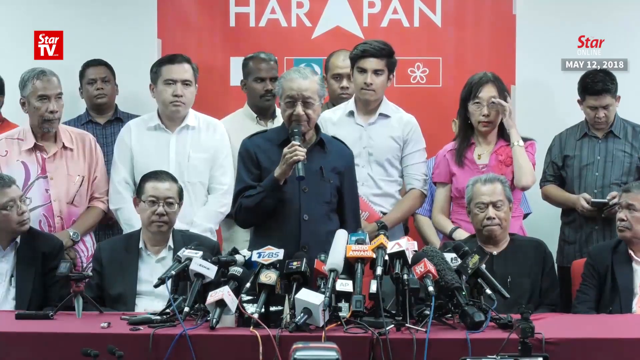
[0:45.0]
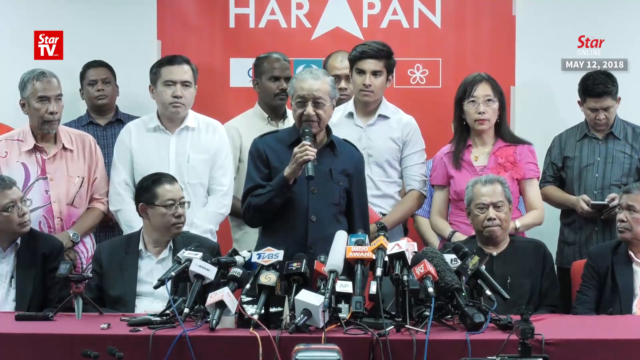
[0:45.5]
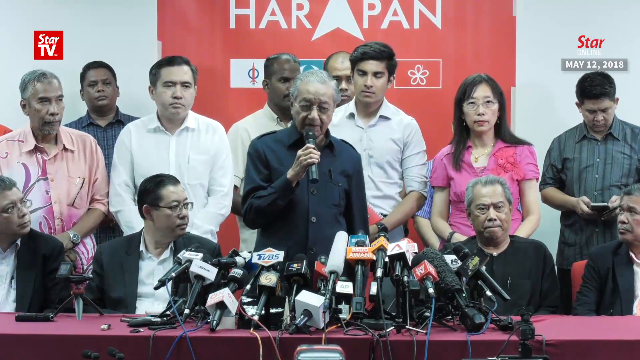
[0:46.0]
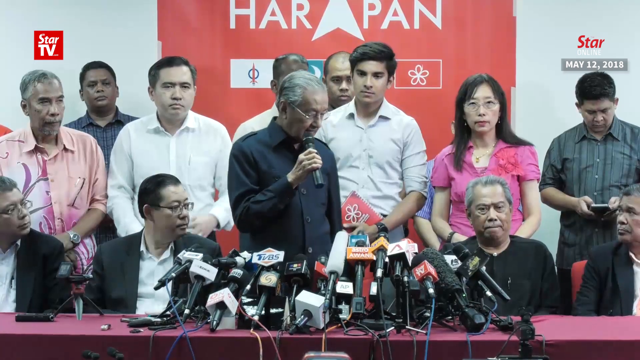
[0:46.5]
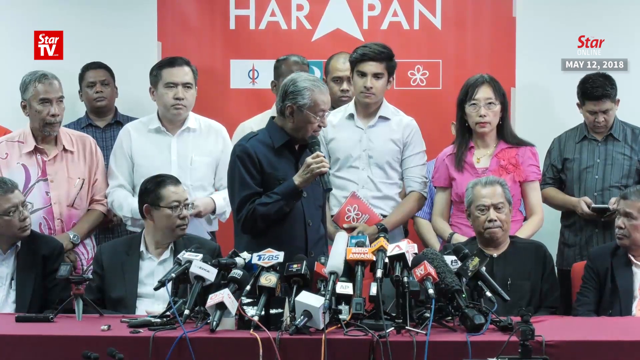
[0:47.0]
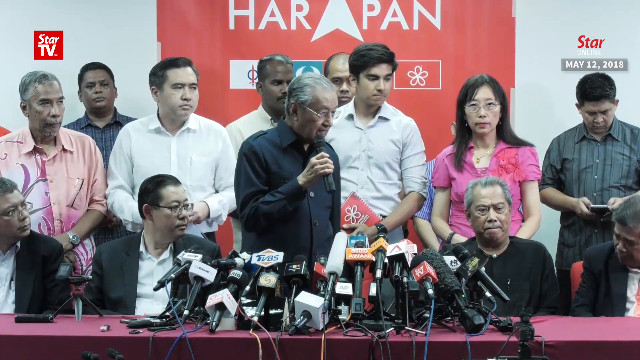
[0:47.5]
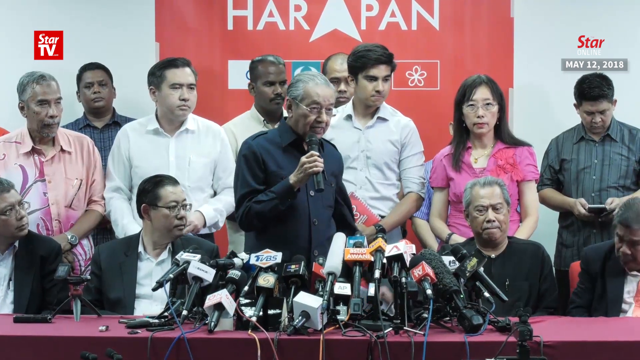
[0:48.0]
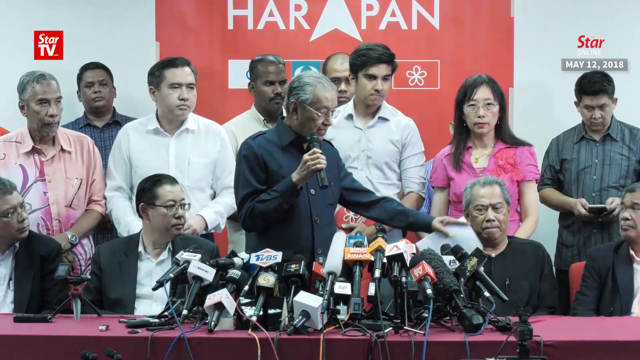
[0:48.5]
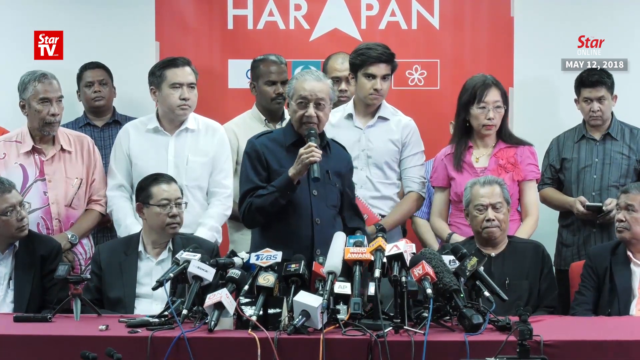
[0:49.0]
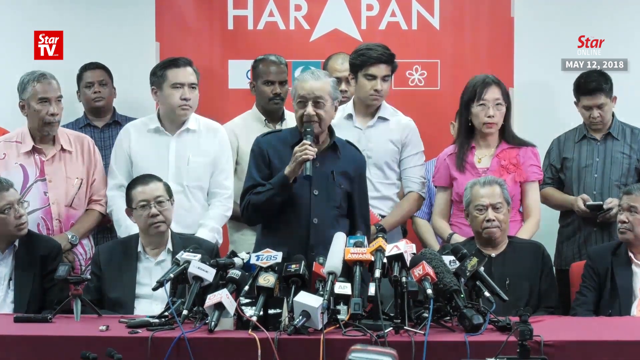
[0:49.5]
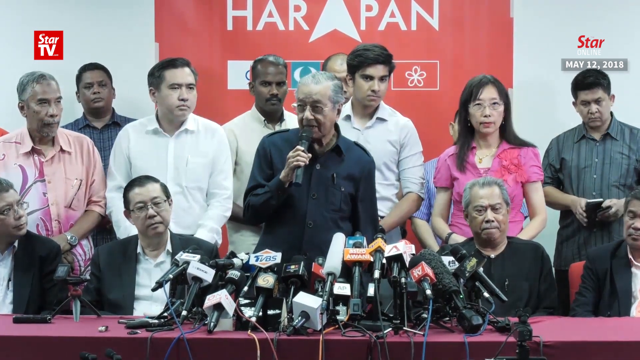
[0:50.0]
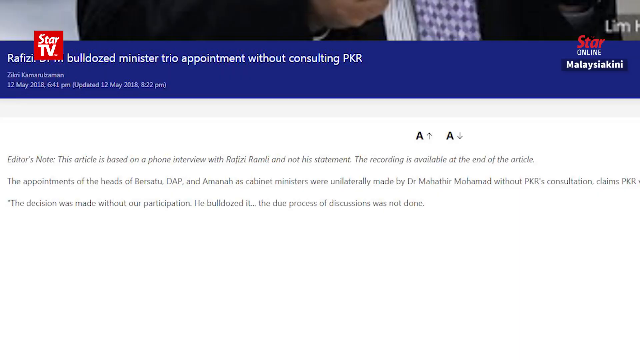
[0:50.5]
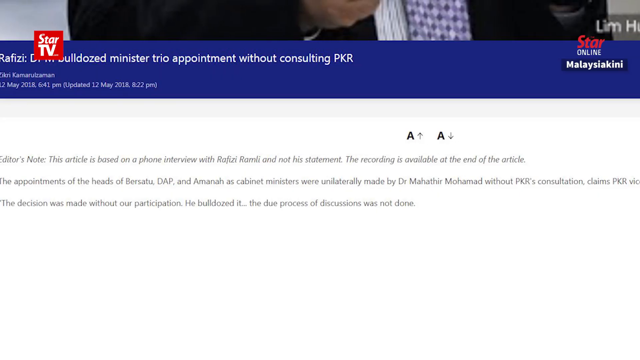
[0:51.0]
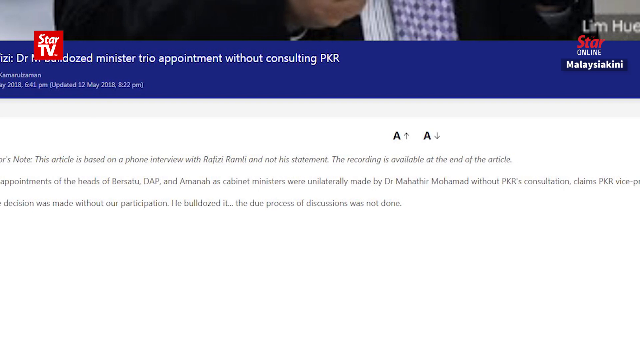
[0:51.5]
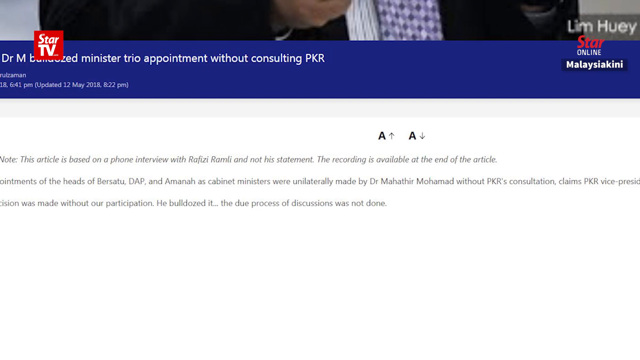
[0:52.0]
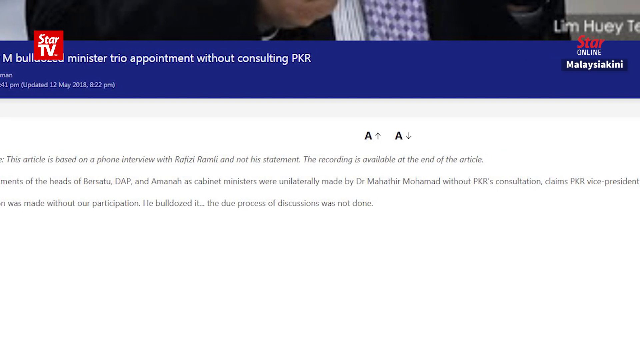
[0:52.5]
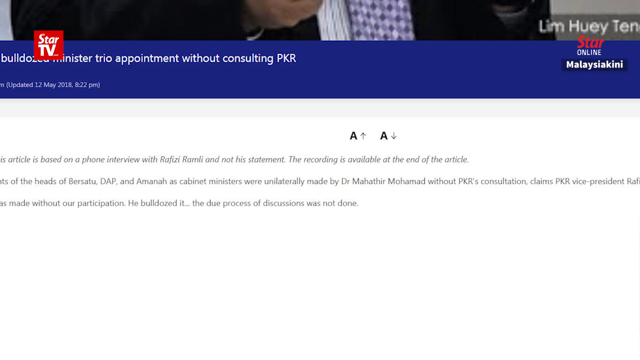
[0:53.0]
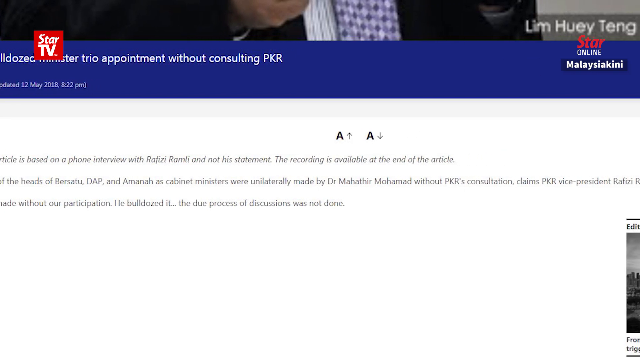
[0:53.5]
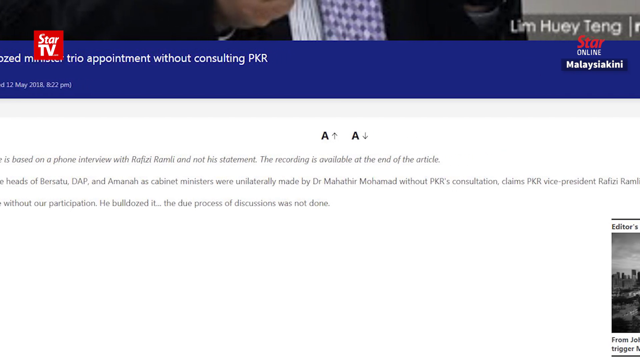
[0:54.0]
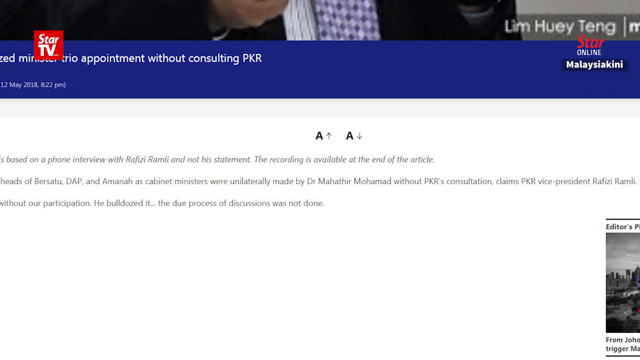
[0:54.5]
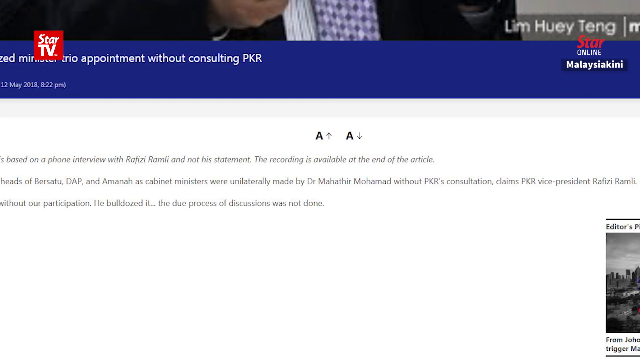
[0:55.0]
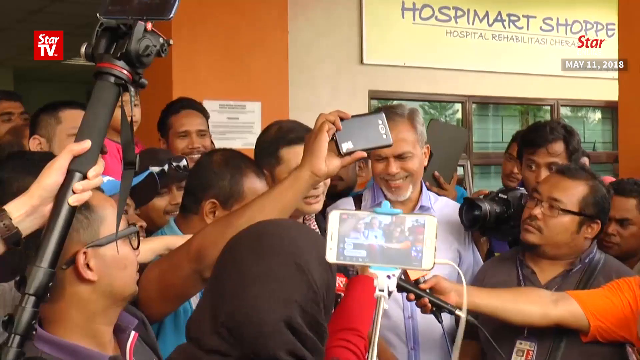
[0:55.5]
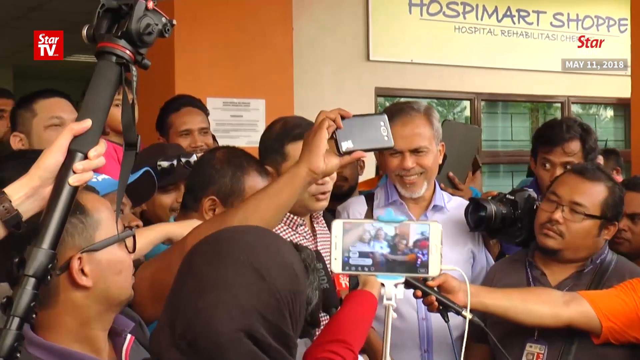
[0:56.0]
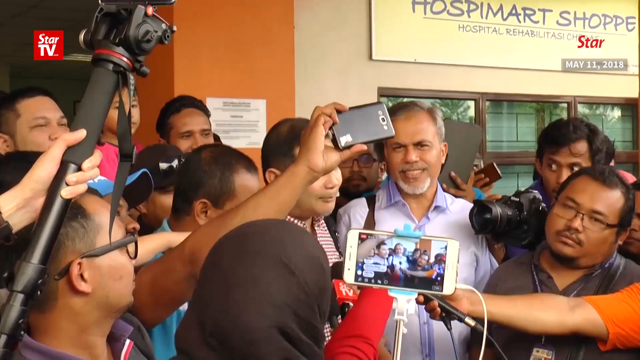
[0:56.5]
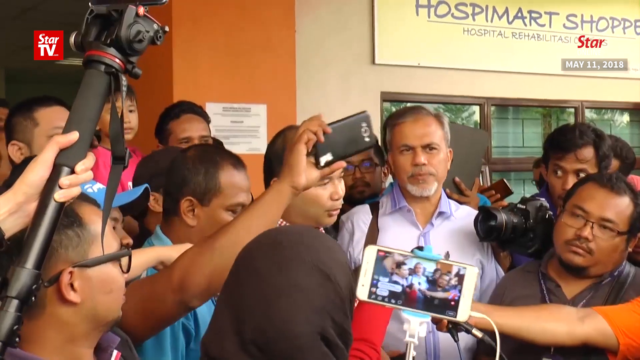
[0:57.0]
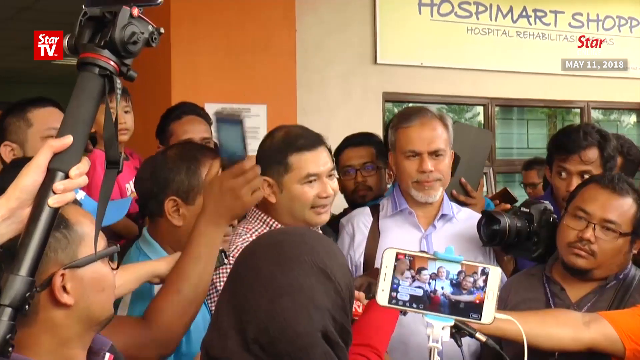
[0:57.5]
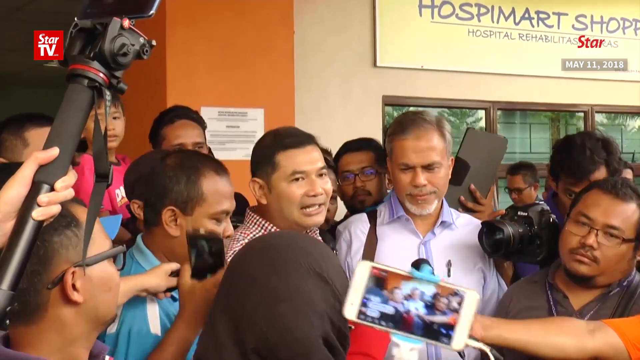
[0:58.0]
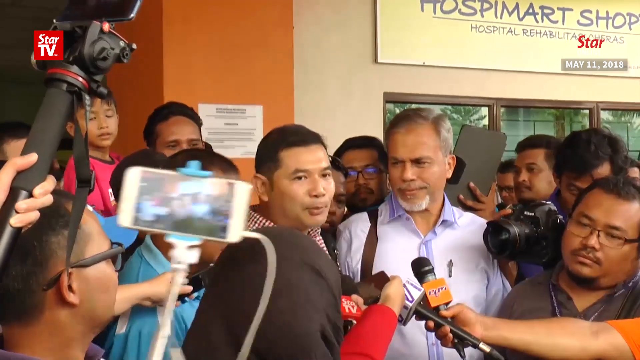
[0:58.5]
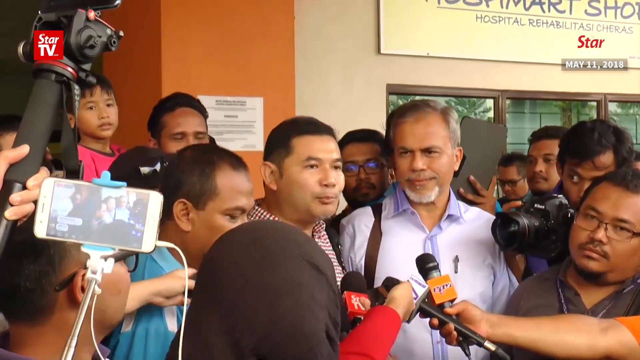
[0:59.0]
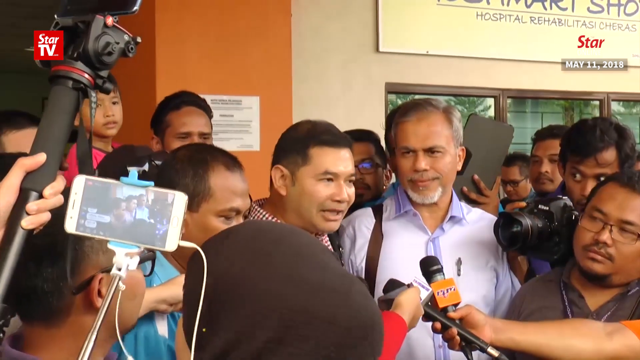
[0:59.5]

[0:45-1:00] The video, from the outlet Star TV, is titled Quit Griping About Cabinet Posts. It opens on a very close-up view of the face of a woman in a light pink hijab and traditional Middle Eastern wear who is speaking with reporters; as the camera pans out, a crowd of people is visible behind her. A graphic appears in the center of the screen with black letters "GE" on the left, a square with a red X in the middle, and the number "14" to the right of the square, apparently marking this as a general election profile. The footage alternates between the woman walking down a village street surrounded by many other women wearing hijabs, her speaking with reporters, and her getting food from a buffet line in what looks to be a tent. The woman appears to be running for a government position in a different country, and the video seems to be a profile of her.